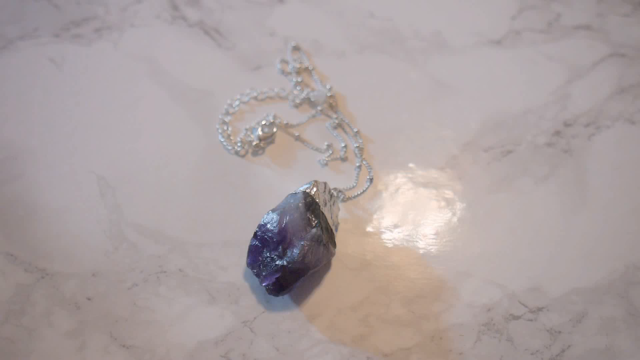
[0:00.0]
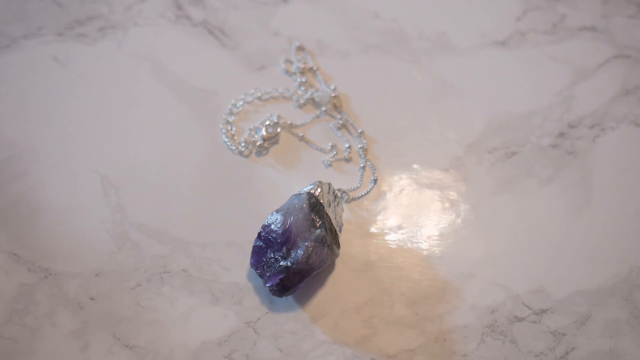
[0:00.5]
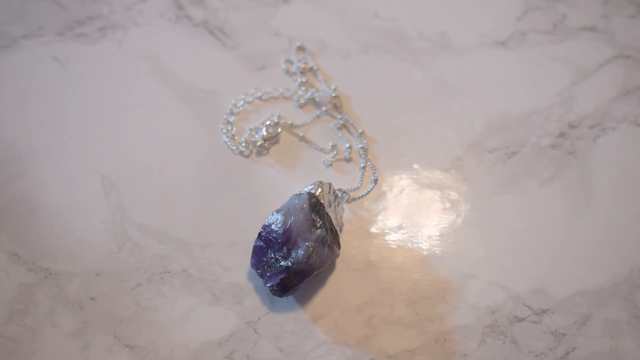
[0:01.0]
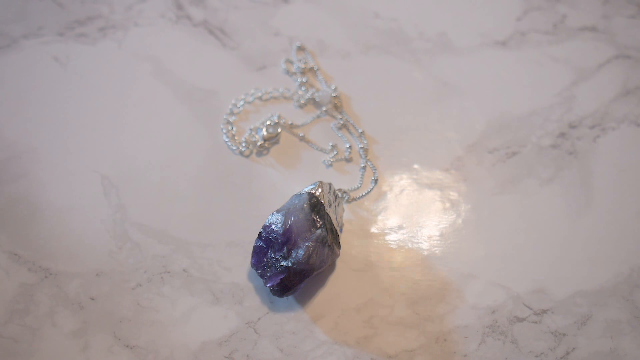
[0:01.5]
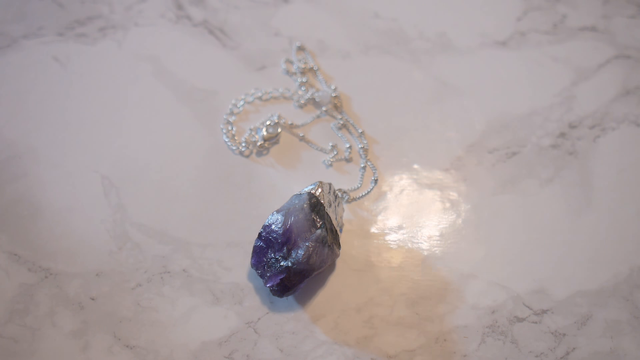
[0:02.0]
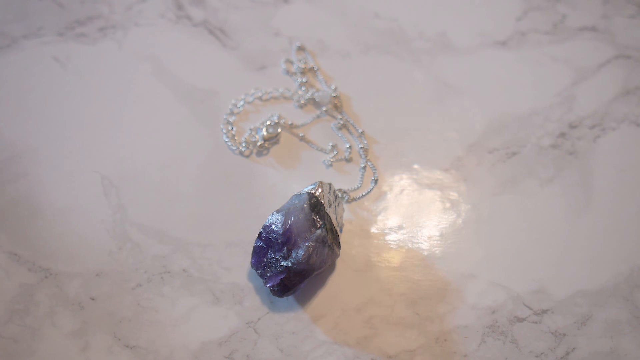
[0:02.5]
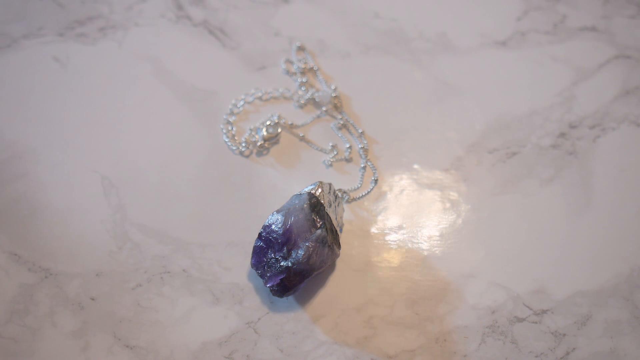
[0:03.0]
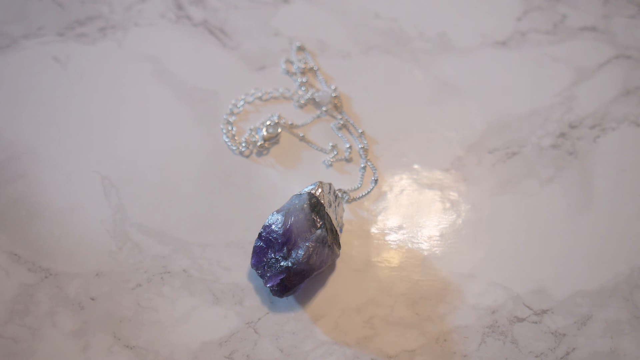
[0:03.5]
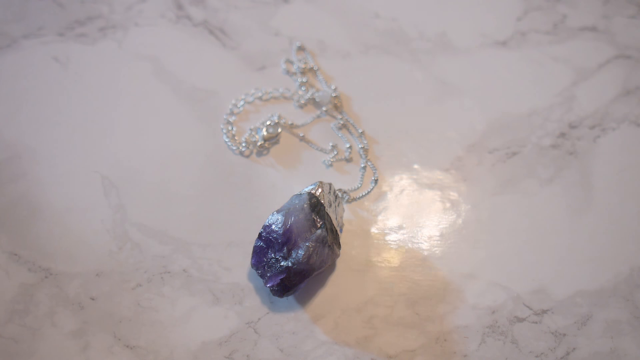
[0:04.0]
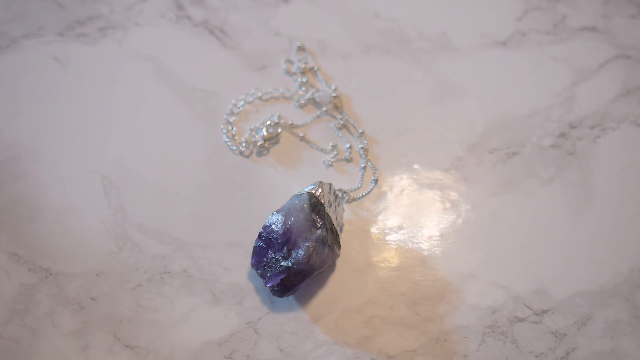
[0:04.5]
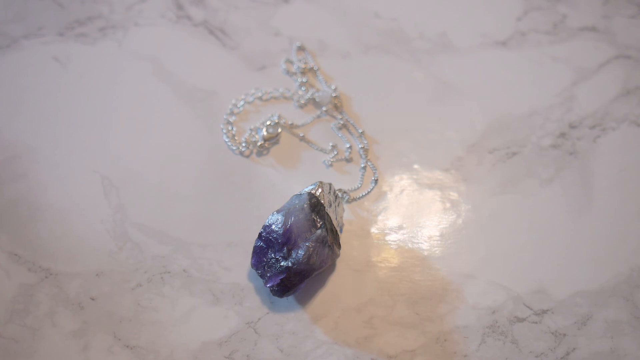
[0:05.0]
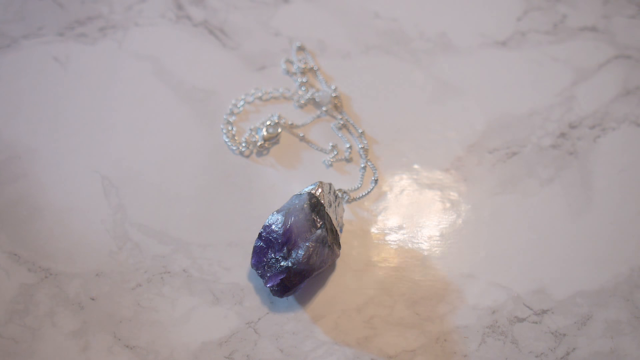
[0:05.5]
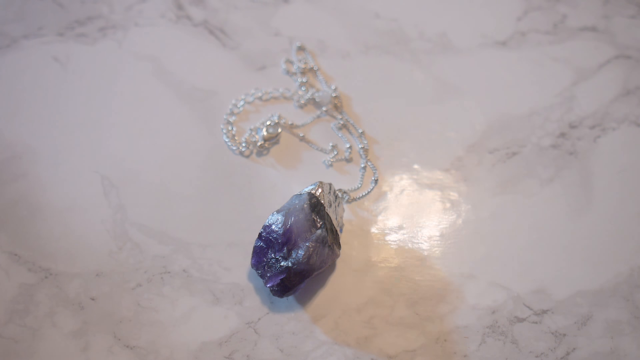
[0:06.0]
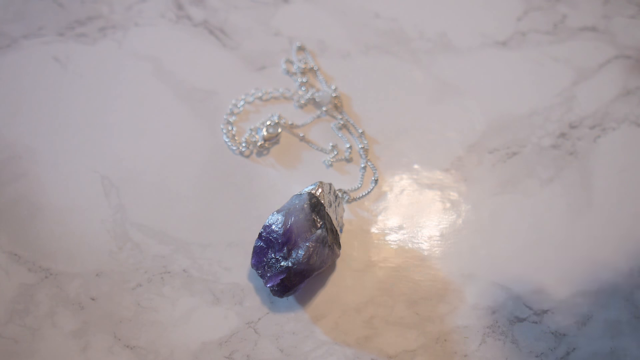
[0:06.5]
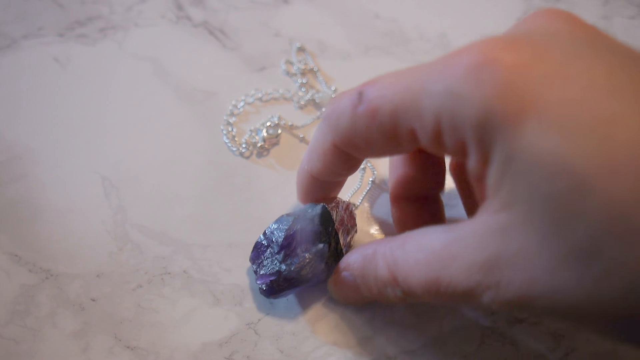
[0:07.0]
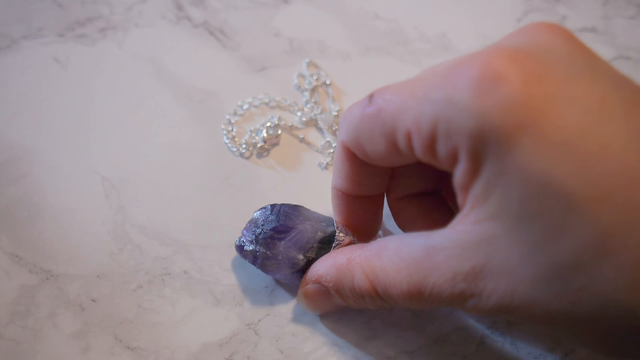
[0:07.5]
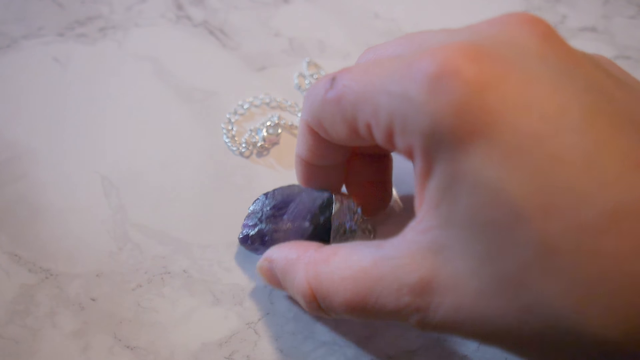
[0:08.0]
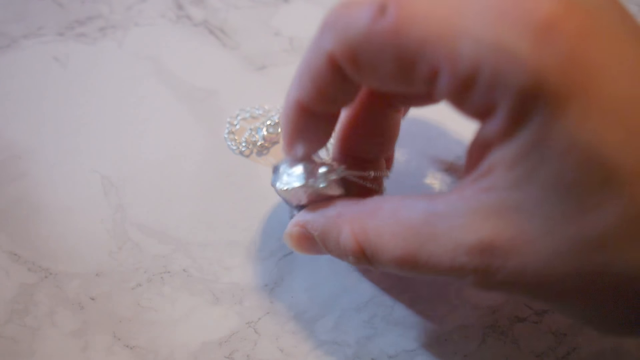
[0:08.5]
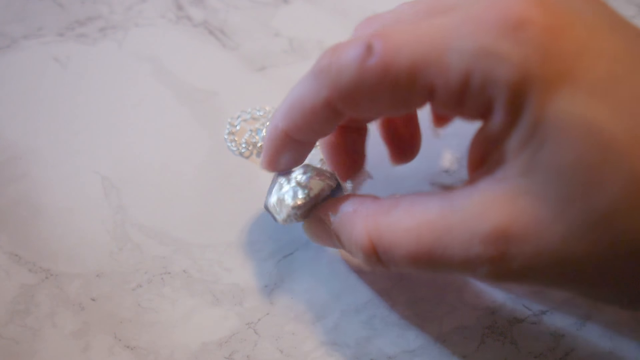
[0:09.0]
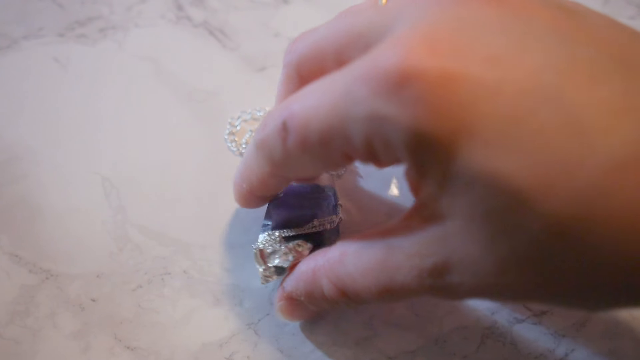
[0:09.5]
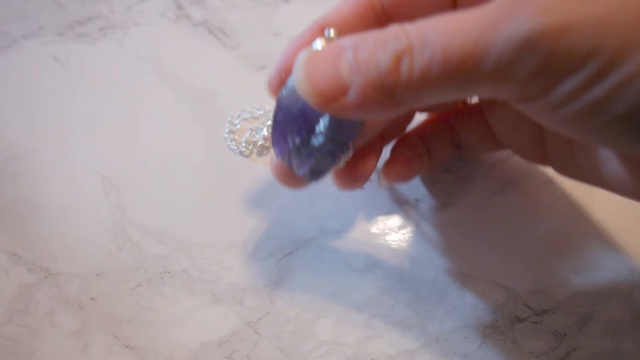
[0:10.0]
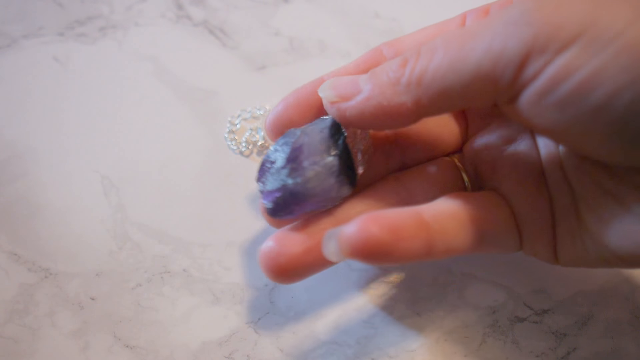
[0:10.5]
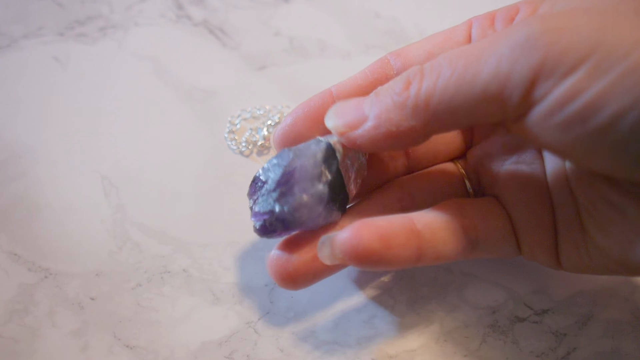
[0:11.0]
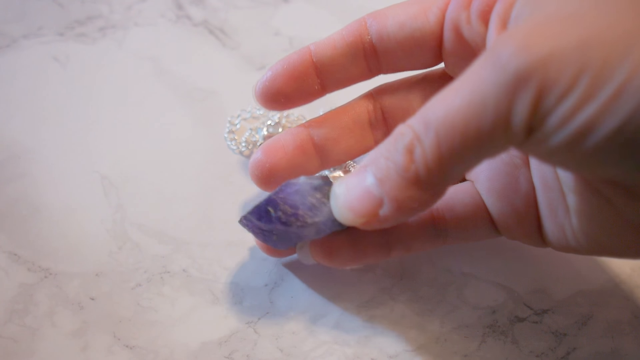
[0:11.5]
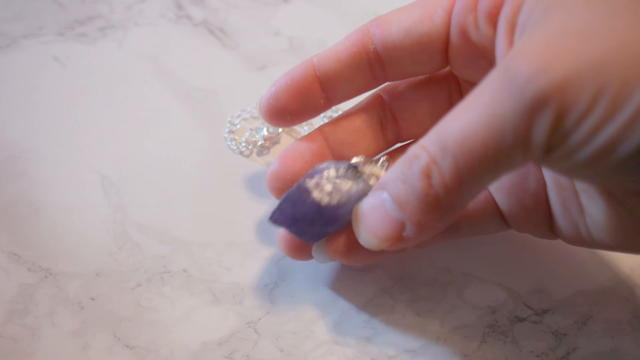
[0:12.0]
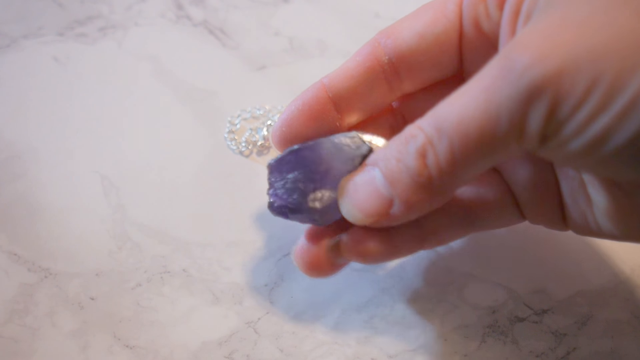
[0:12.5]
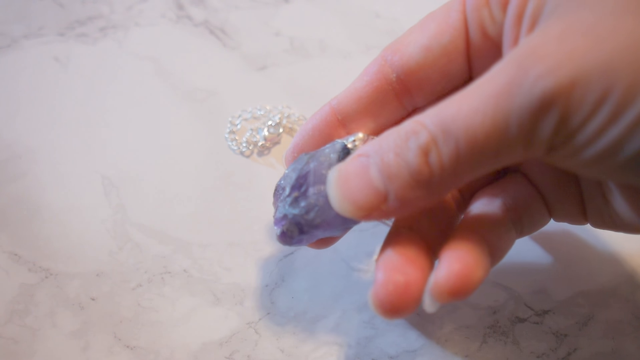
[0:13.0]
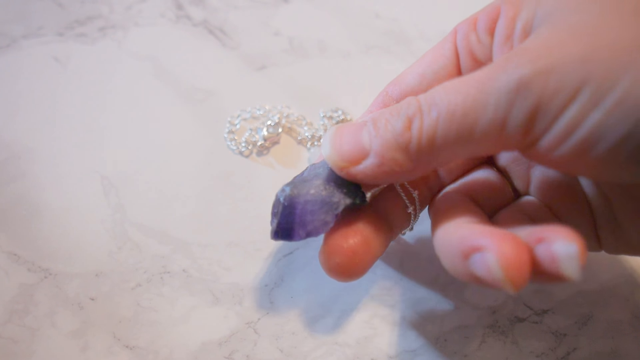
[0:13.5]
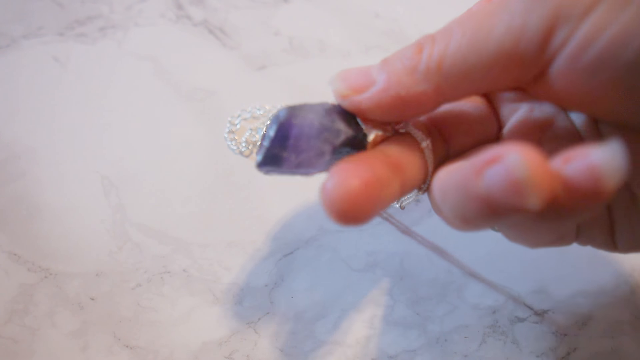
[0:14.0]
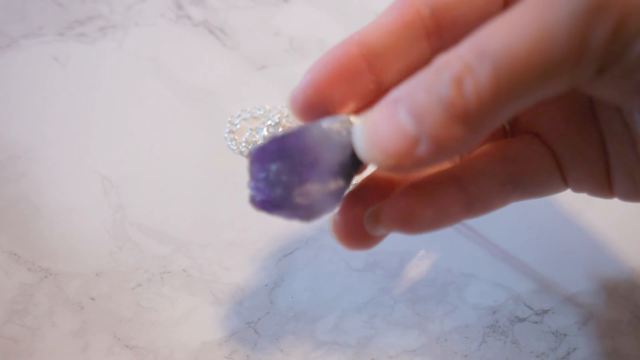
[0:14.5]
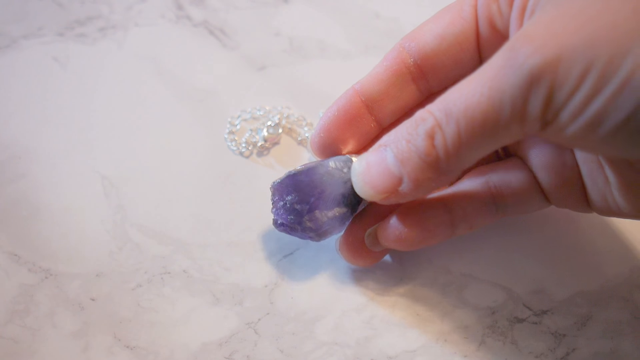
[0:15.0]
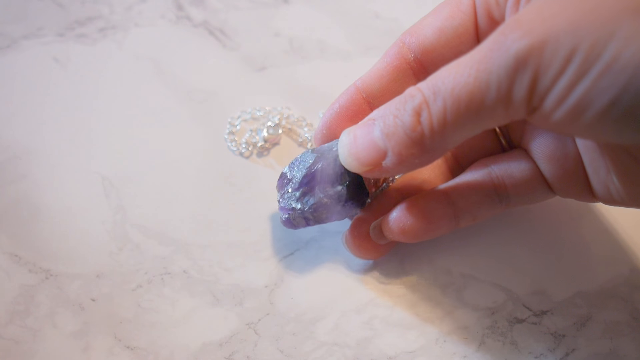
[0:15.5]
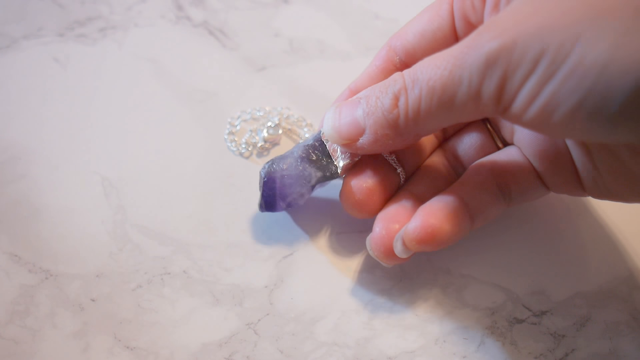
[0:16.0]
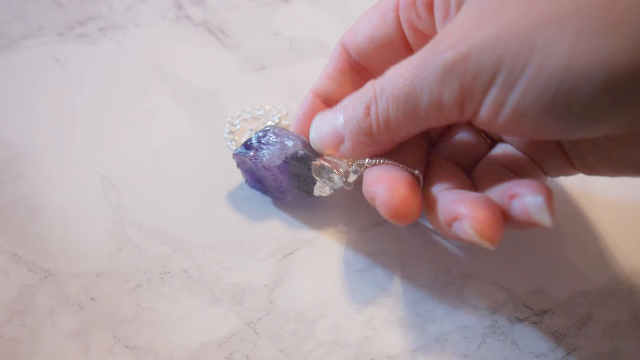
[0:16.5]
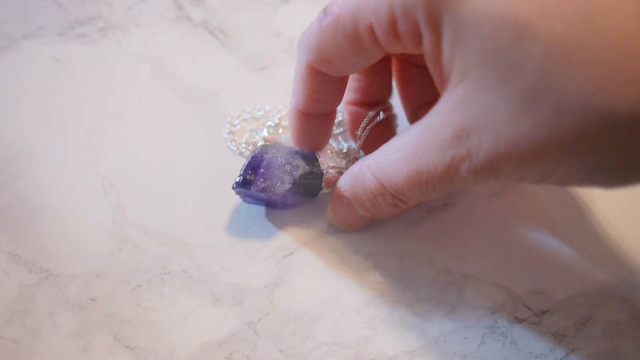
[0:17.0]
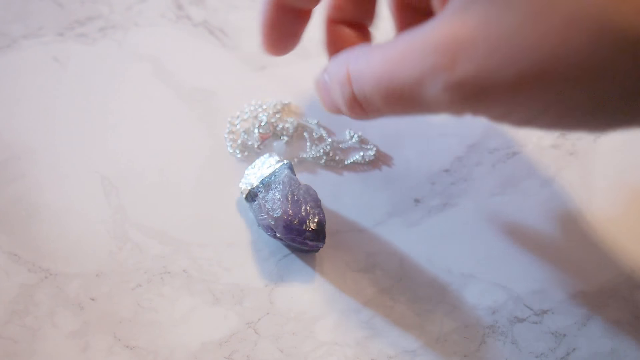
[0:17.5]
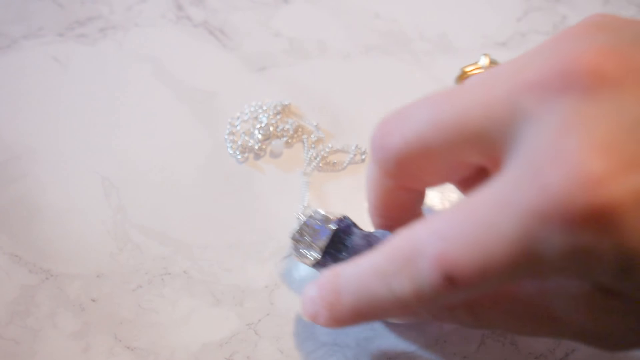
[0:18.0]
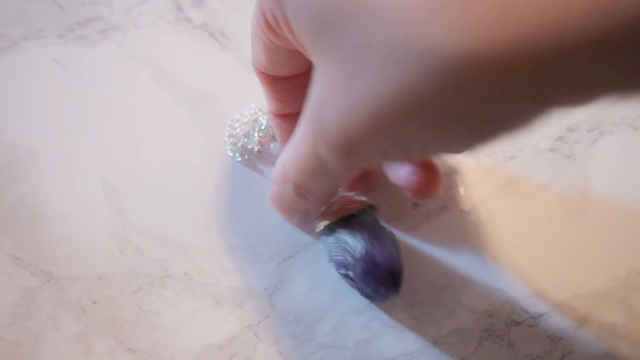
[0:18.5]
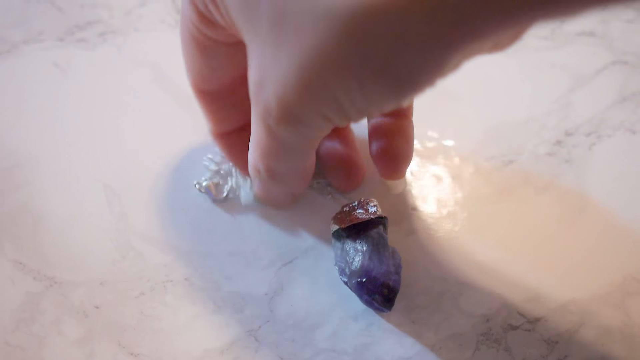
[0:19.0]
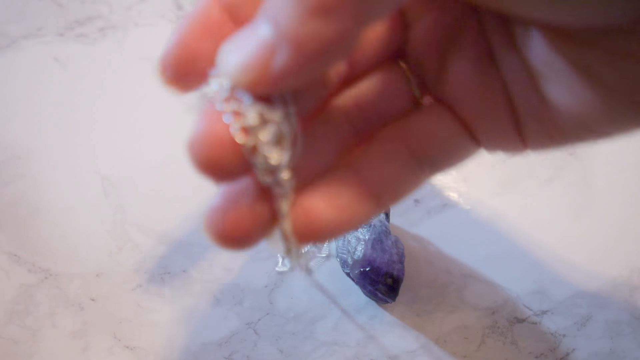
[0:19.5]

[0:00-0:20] A very shiny necklace lies on a white surface, and its reflection is visible on the floor. The necklace is possibly made from a very expensive piece of gold, or from a piece of metal. A hand picks it up and looks through it, checking one part and then the other end, twisting it around to show all sides and the details of the necklace. Judging from the reflection, the necklace seems to be made from a precious stone; it is very shiny and purple. As it sits on the floor, its reflection on the surface is clearly visible and looks like a light.